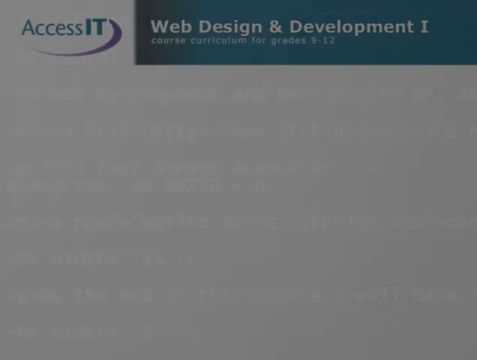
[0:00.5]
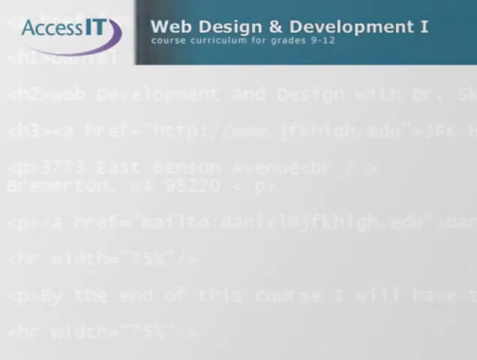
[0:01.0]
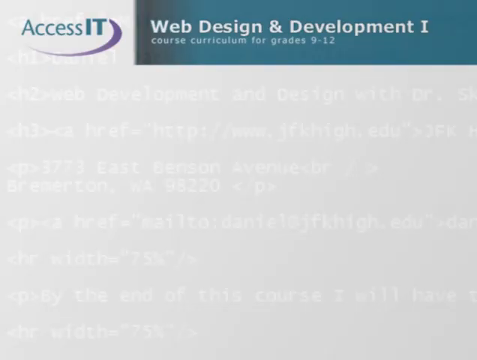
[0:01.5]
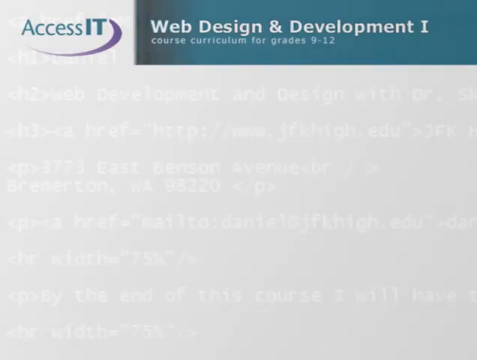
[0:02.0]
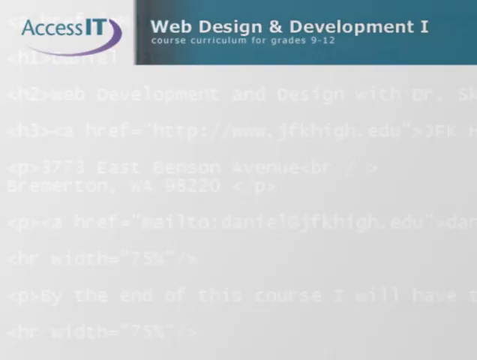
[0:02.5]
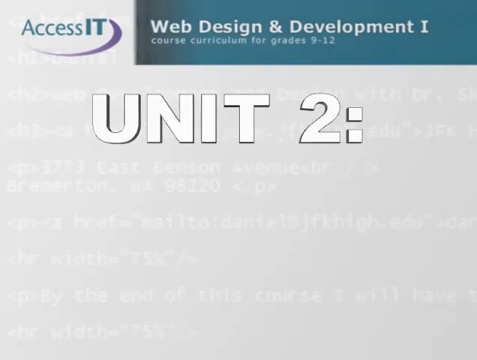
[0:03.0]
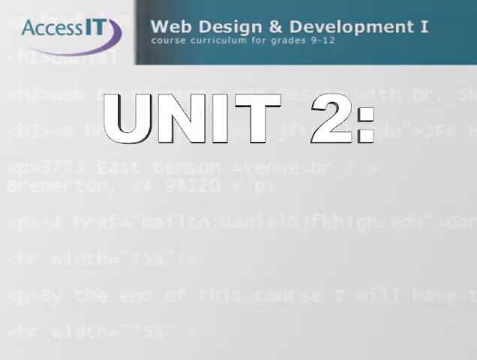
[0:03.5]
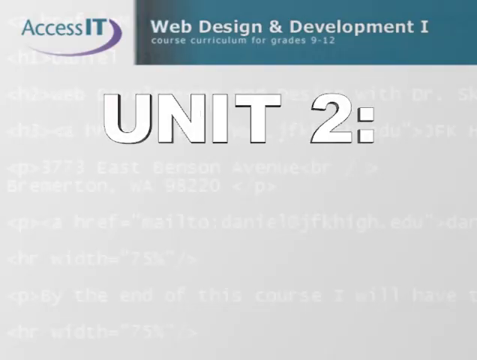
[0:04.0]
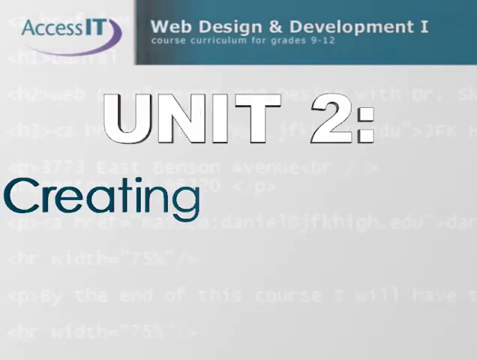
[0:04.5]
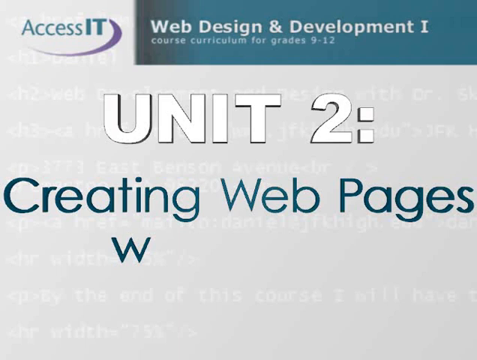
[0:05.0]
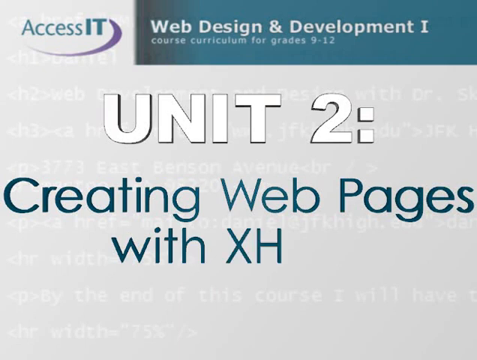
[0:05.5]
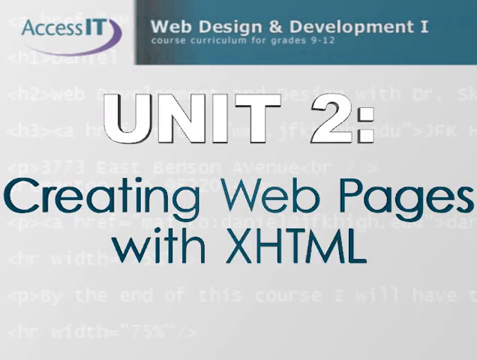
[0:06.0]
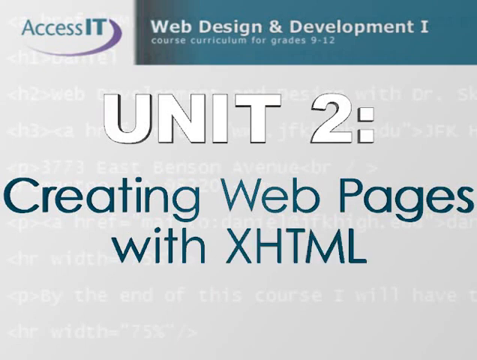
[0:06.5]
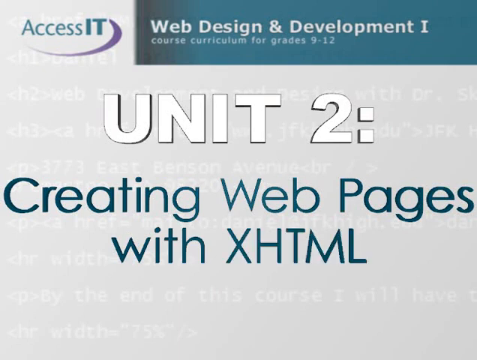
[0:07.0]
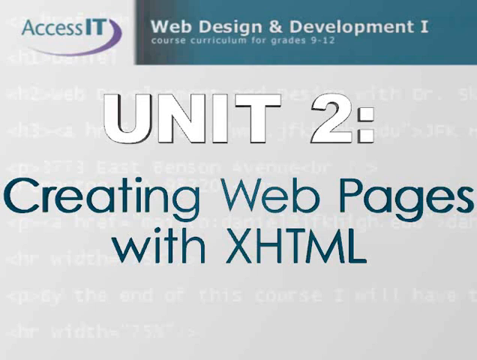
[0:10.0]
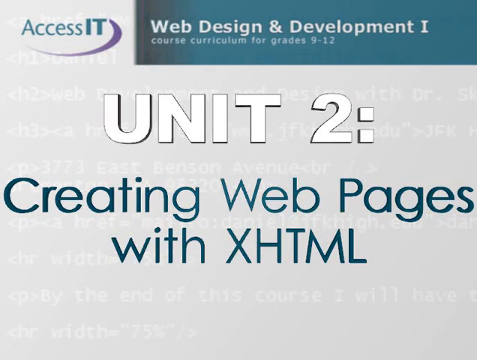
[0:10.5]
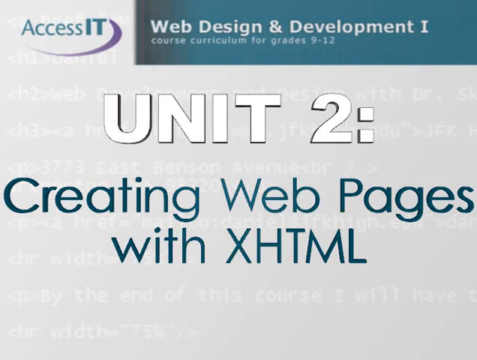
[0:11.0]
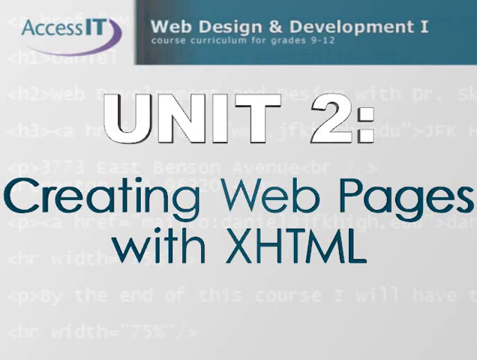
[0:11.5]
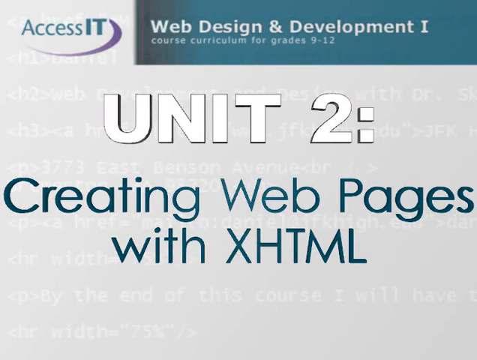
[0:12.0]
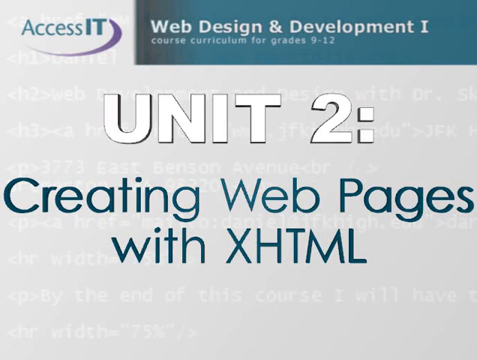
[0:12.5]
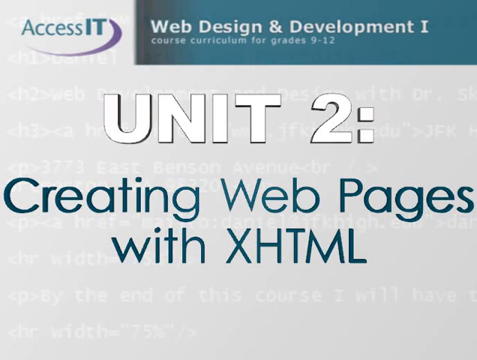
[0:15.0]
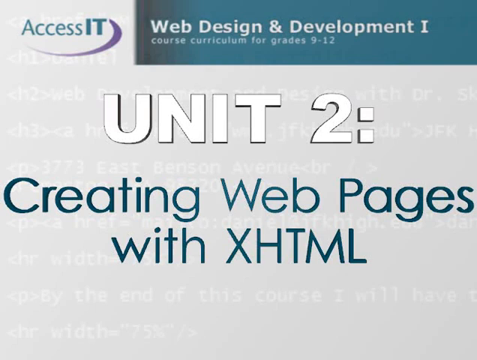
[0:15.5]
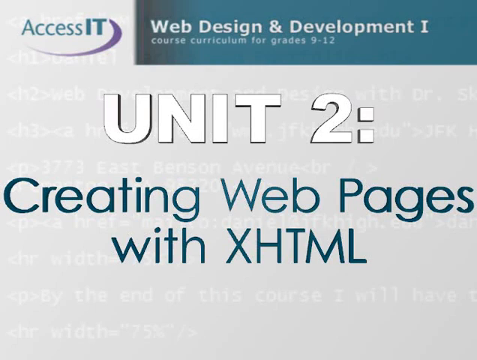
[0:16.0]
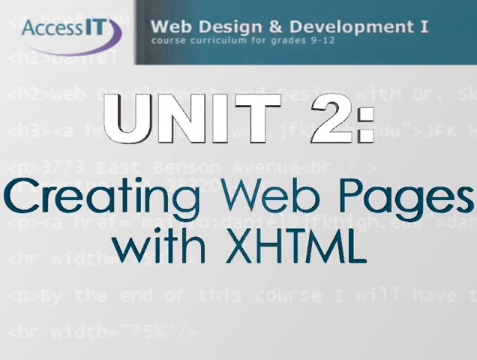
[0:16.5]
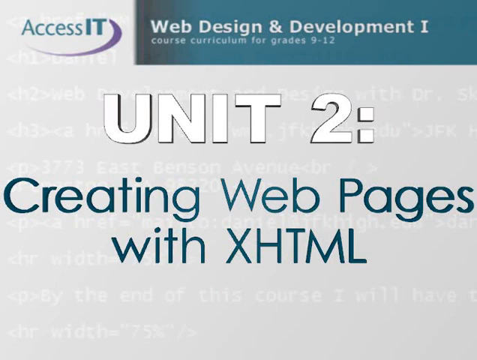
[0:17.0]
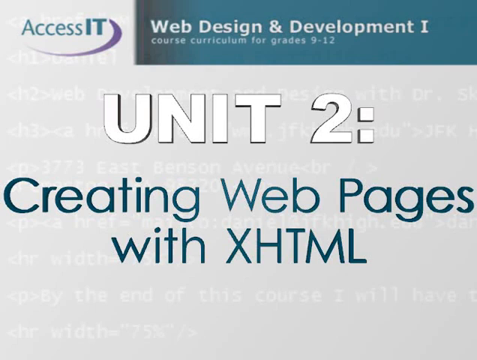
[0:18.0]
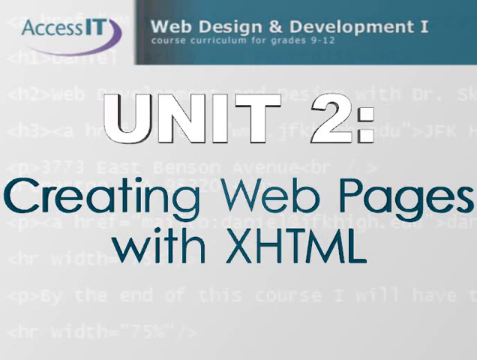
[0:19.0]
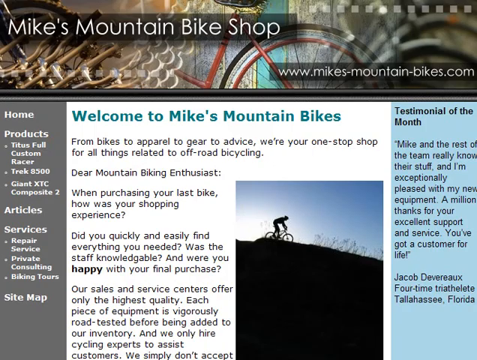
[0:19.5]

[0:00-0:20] The video opens with an introduction to a course. Text on screen reads "IT web design development one course curriculum for grades 9 through 12" and "Unit 2 creating web pages with XHTML"; it is apparently a web design and development course for high school students. Just before the shot ends, a web page flashes by quickly, reading "Mike's Mountain Bike Shop" and "Welcome to Mike's mountain bikes."